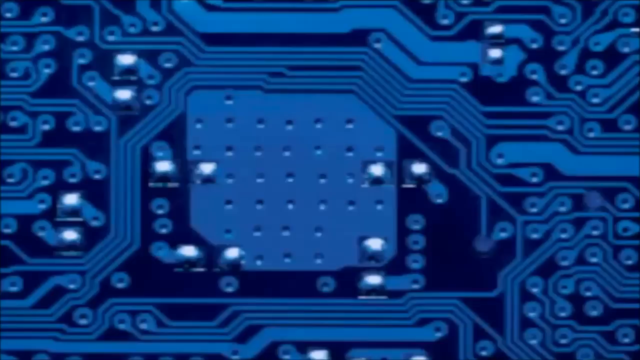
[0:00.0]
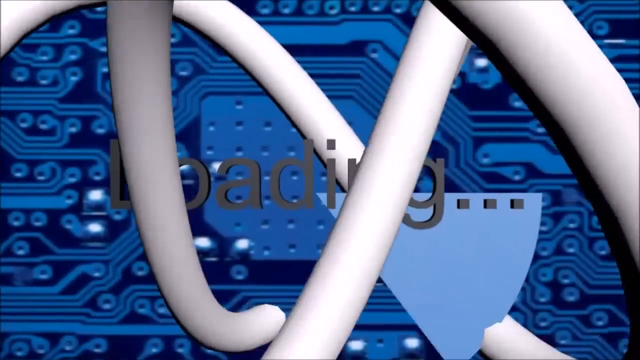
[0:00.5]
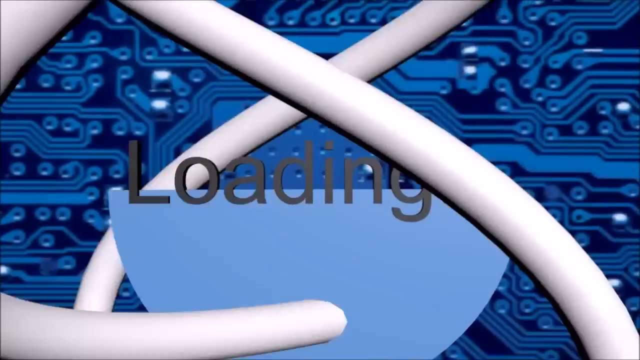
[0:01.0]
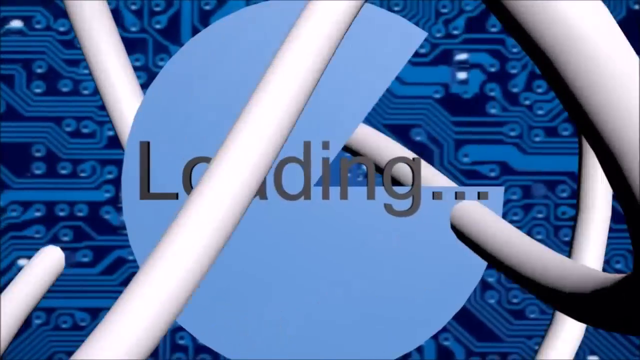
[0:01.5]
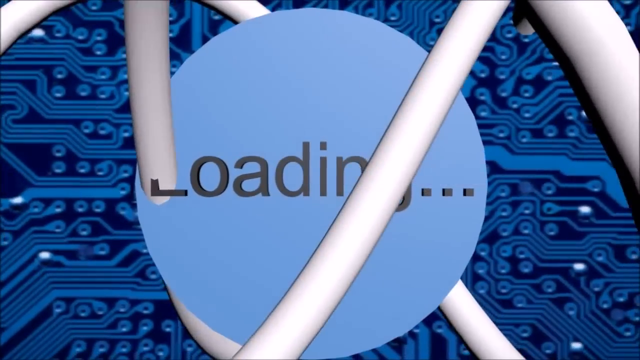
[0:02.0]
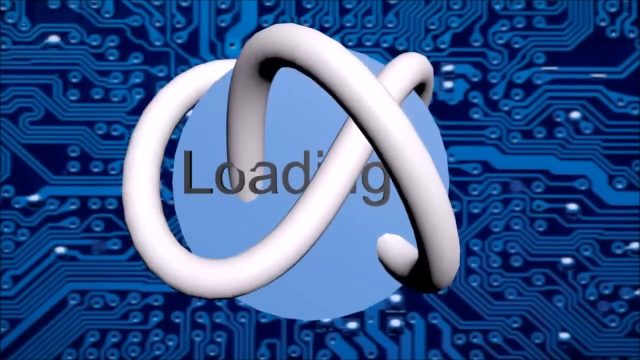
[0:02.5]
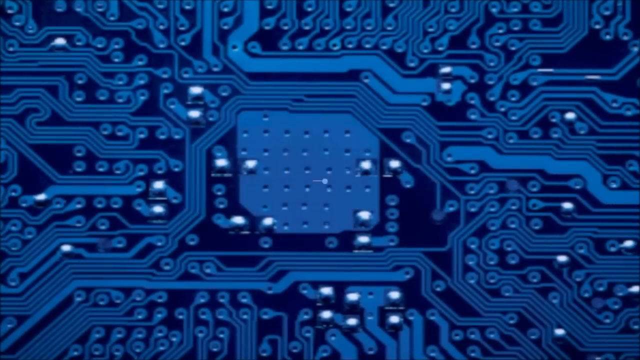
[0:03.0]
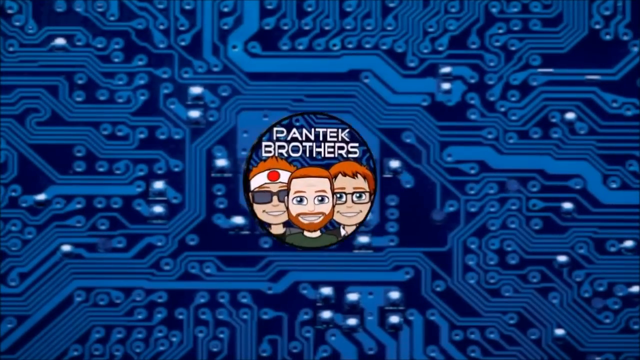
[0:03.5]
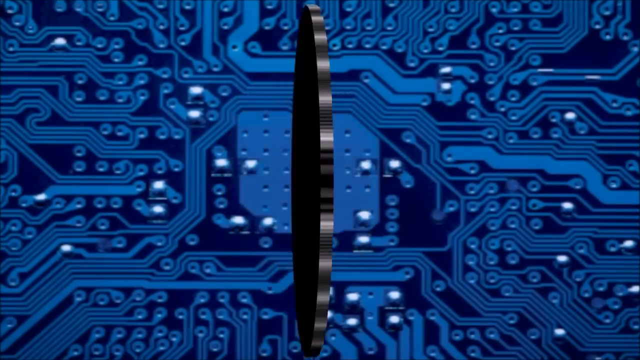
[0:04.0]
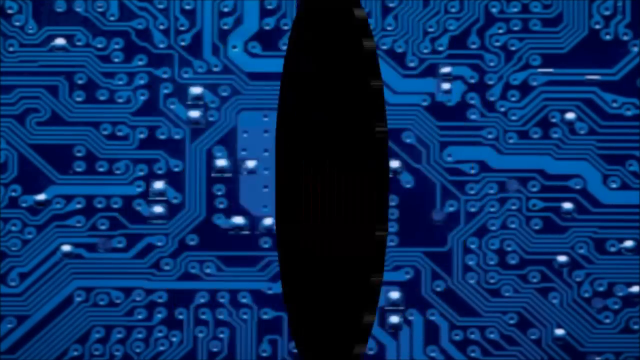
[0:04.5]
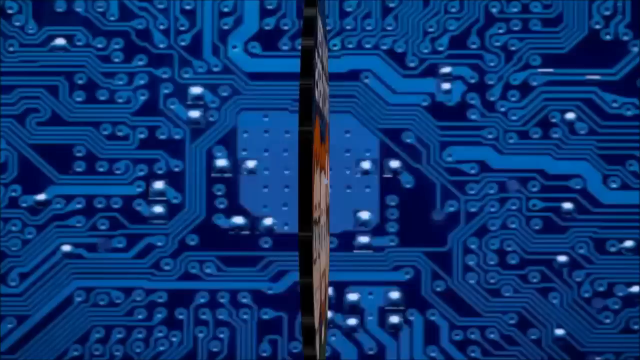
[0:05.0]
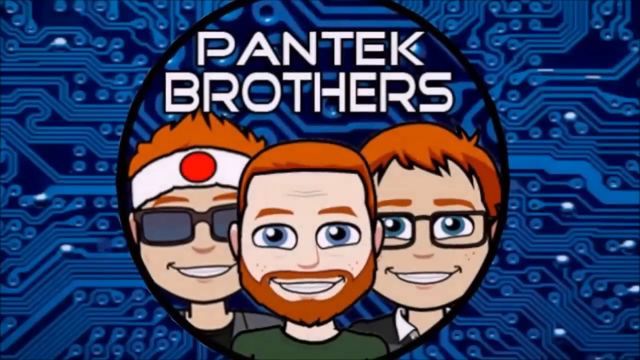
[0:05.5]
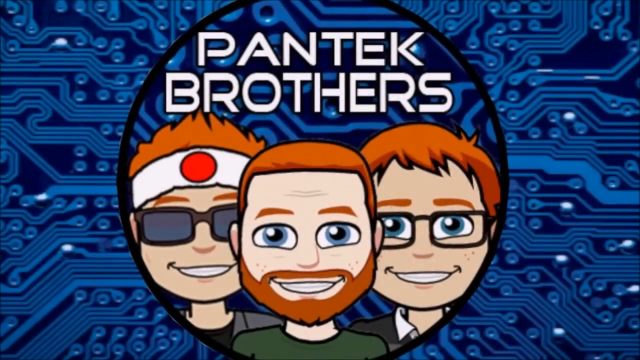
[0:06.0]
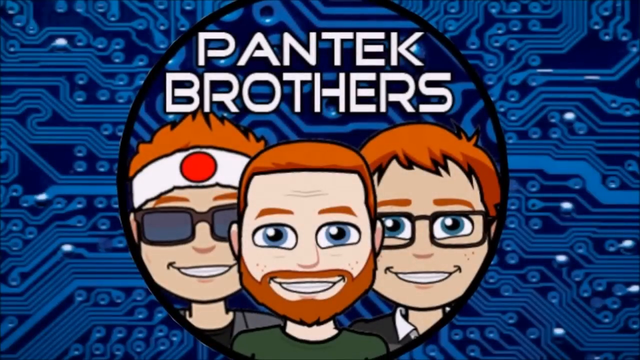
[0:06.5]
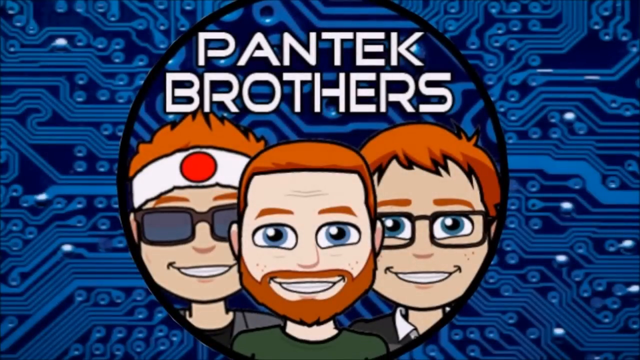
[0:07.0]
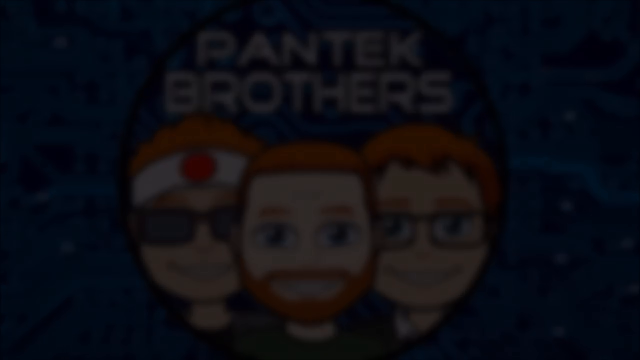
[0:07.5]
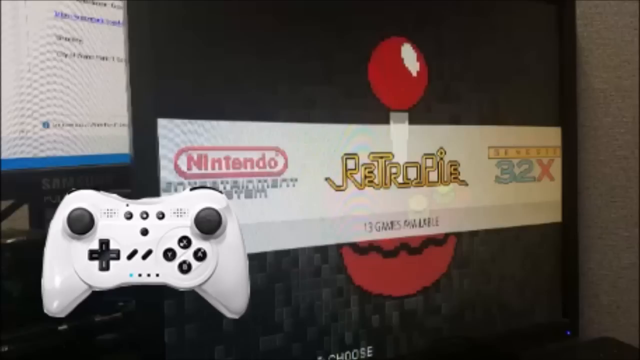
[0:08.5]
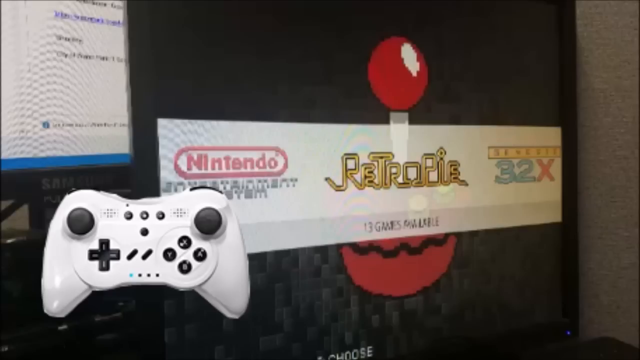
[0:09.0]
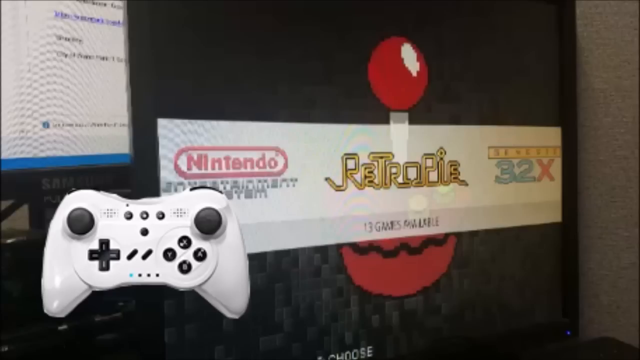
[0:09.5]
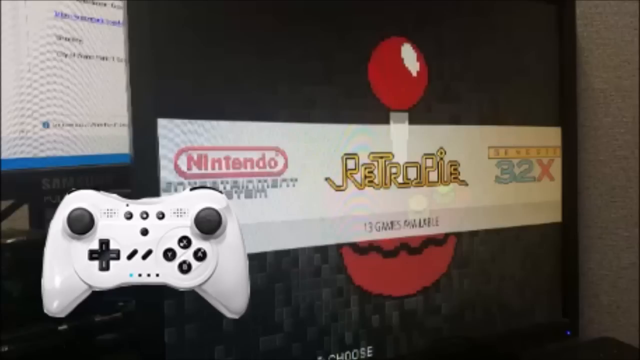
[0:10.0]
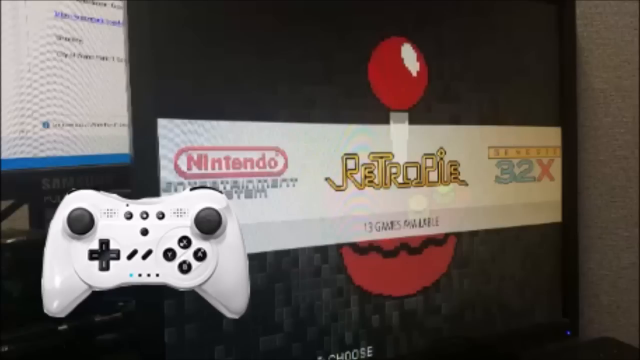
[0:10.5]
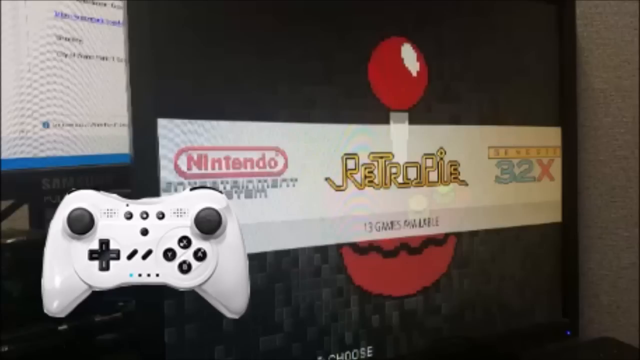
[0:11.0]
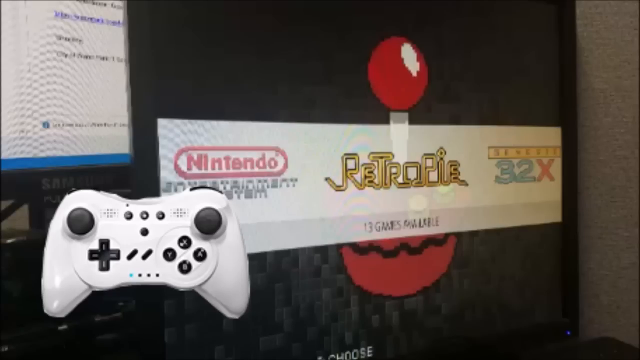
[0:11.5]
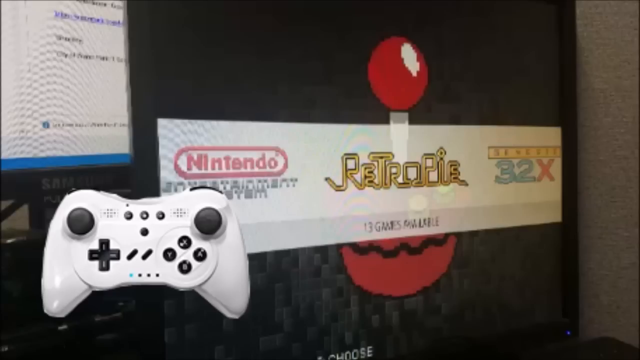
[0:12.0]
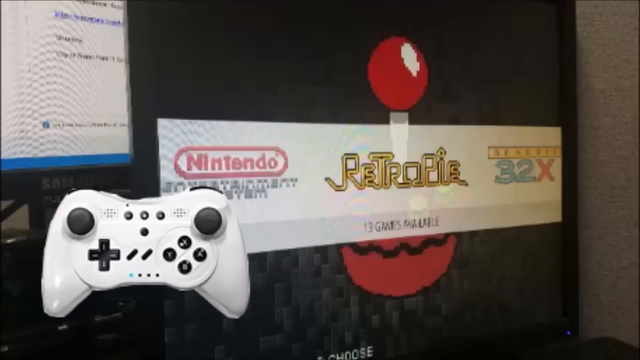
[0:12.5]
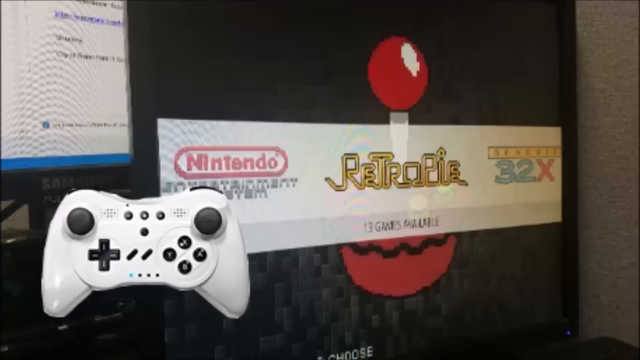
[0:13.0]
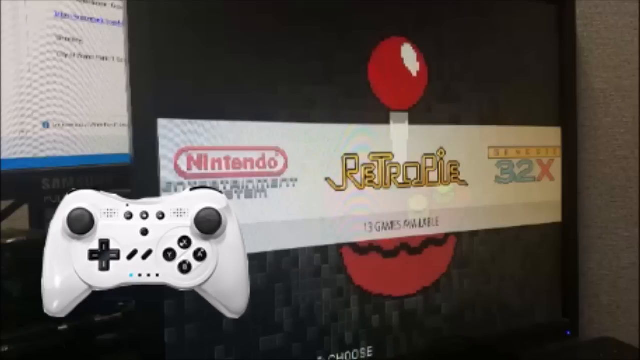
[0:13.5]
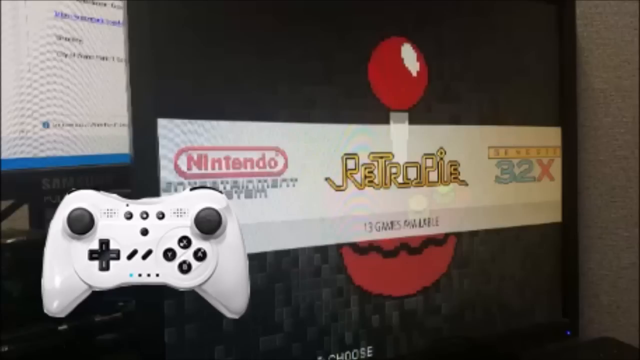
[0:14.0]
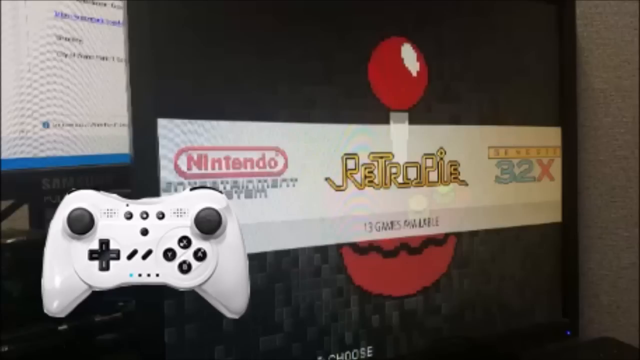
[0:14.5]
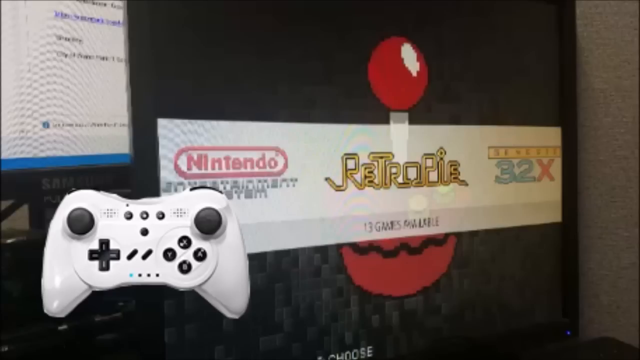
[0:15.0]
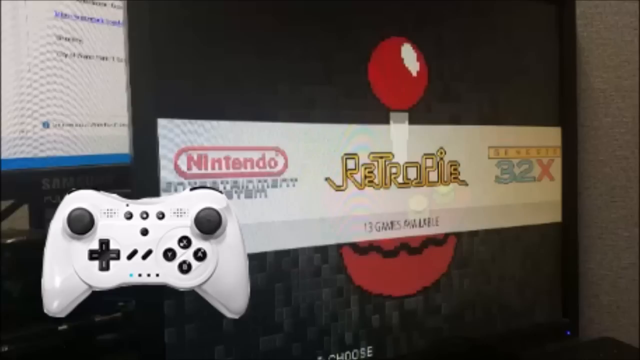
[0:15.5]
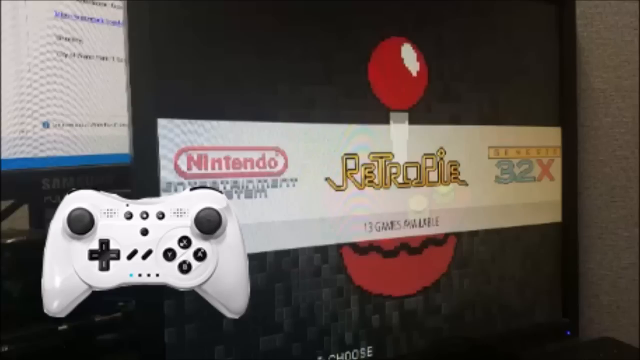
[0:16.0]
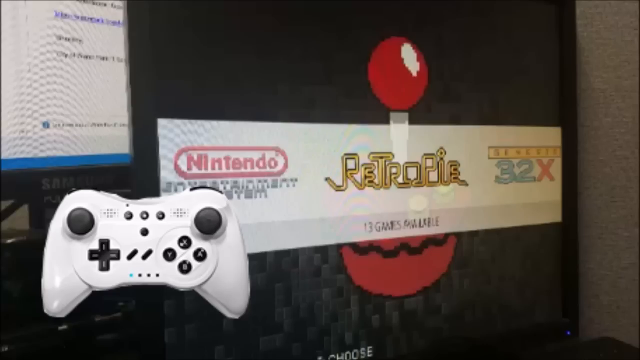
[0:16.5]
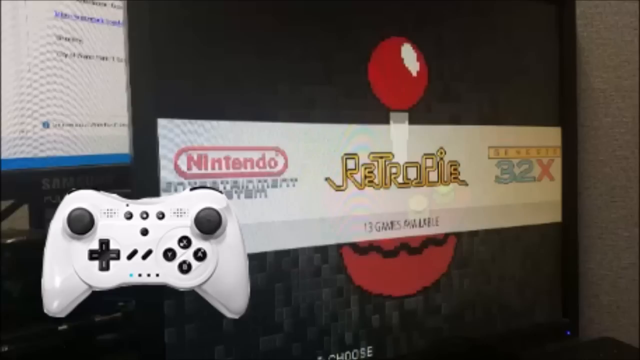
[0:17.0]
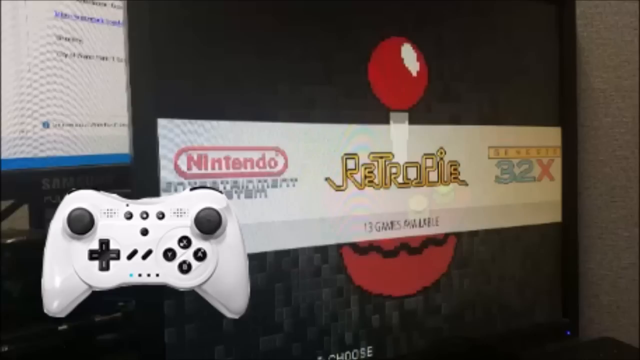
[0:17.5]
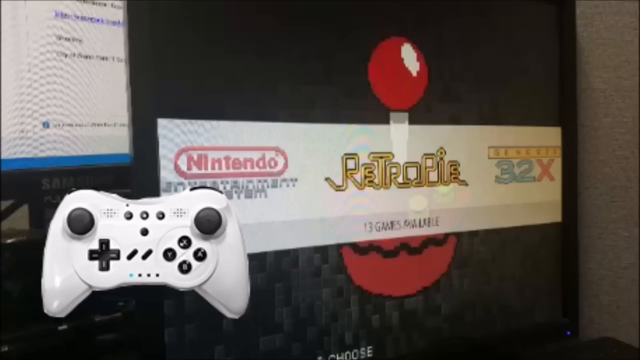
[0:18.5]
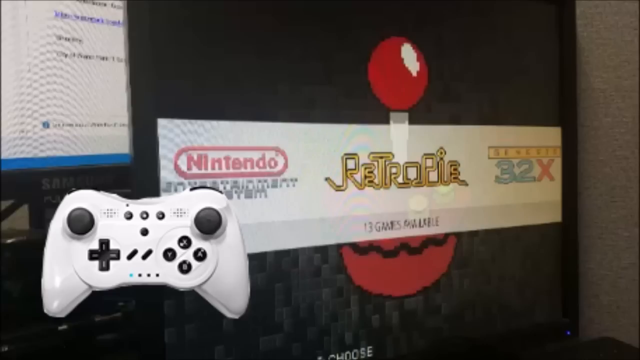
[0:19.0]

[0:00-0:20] The video opens on a close-up image of a motherboard tinted blue, in dark blue and baby blue, with spots of silver on it. A logo begins to swirl on the page and grows larger with the word "loading" in the middle; it circles until it backs out and disappears. A circle appears with the words "Pantek Brothers" and an image of three red-haired young men. The one on the right wears prescription glasses; the one on the left wears sunglasses and a kamikaze band around his hair; the one in the middle has no glasses but a full red beard. The image dissolves into an image of a PC screen that looks like it is on a desk in the corner of an office space or cubicle. Superimposed on the left is a white plastic hand controller with black buttons. On the screen is an image of a red joystick and a banner with "RetroPie" in the middle and "13 games", with the Nintendo logo to the left and a 32X logo to the right.